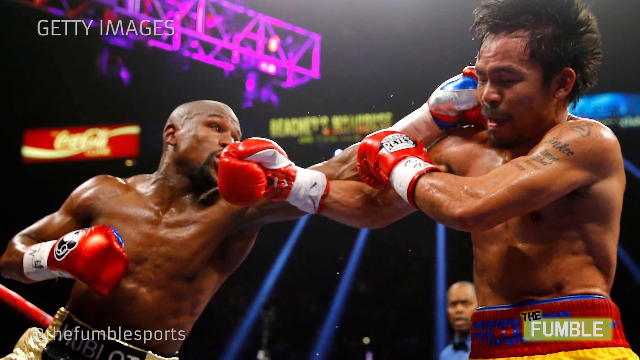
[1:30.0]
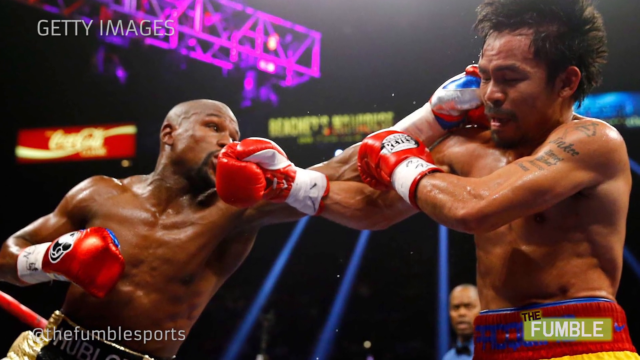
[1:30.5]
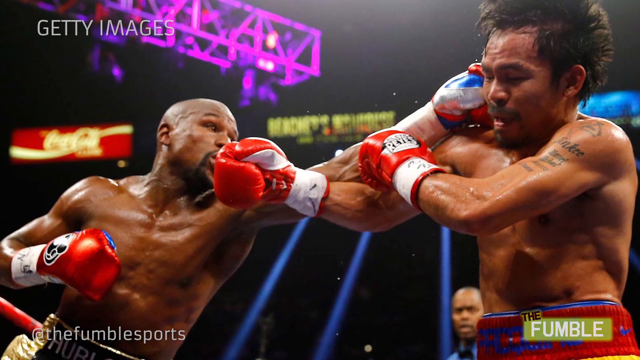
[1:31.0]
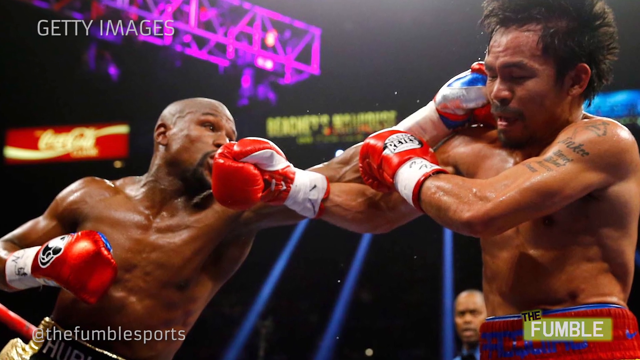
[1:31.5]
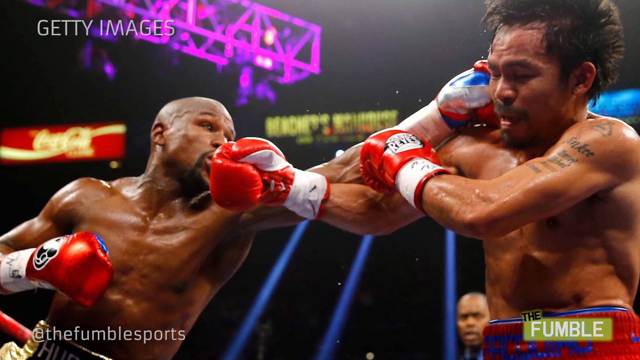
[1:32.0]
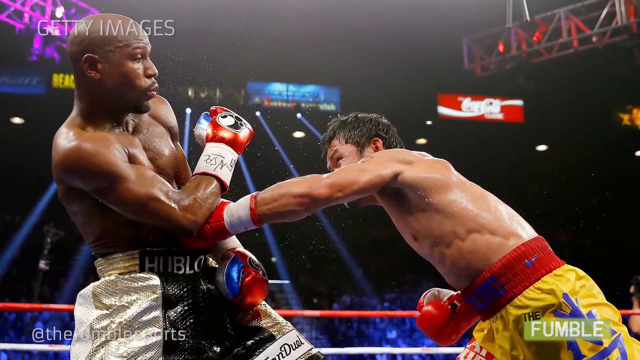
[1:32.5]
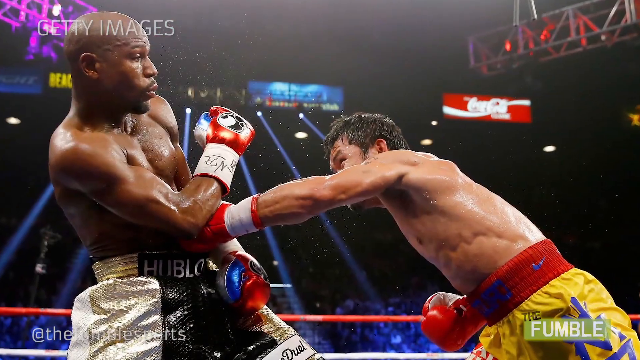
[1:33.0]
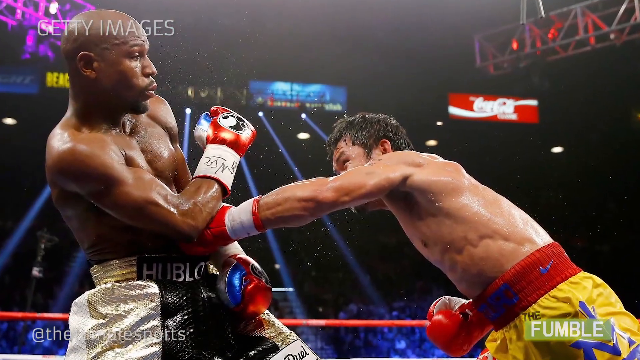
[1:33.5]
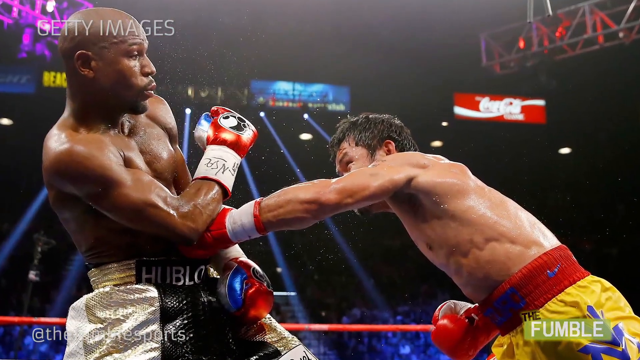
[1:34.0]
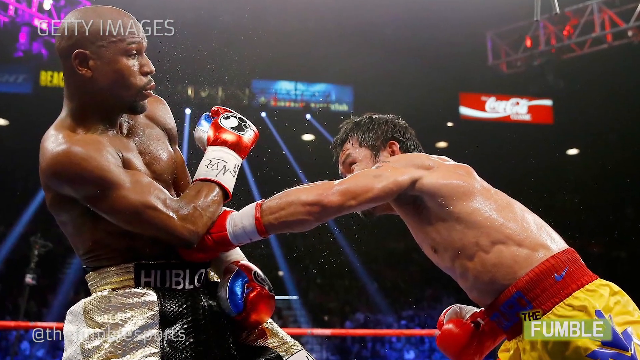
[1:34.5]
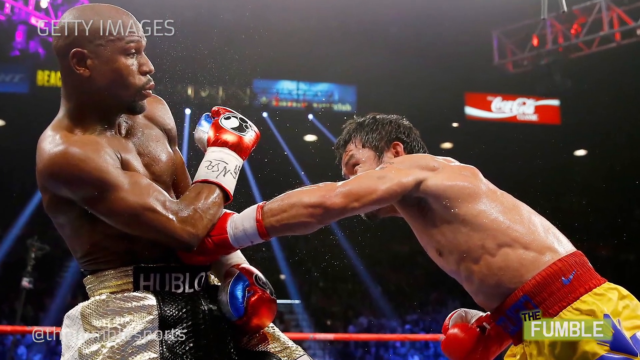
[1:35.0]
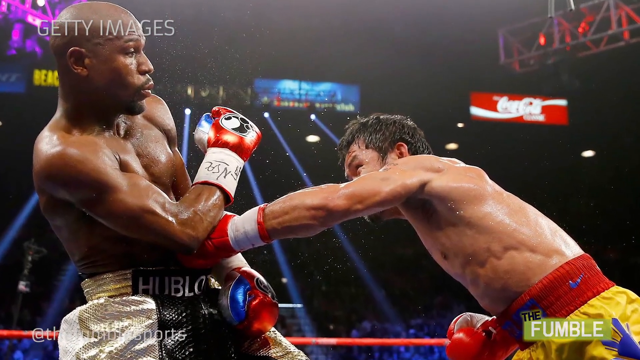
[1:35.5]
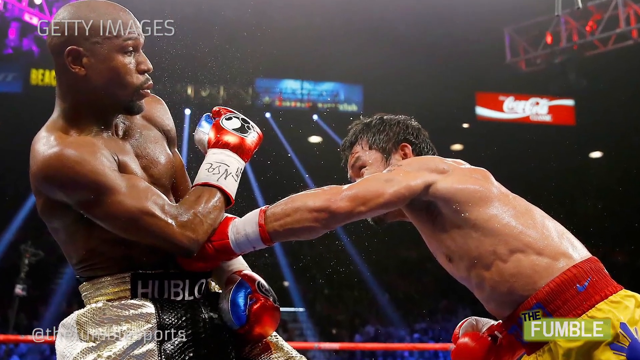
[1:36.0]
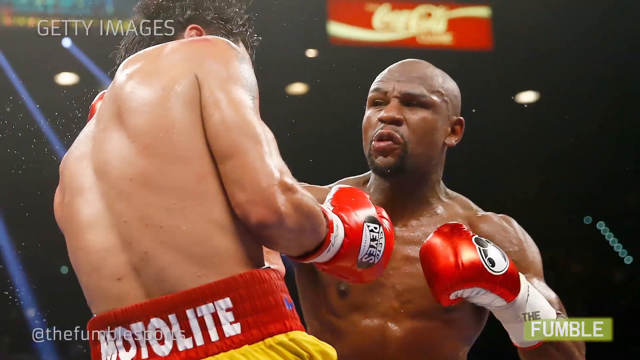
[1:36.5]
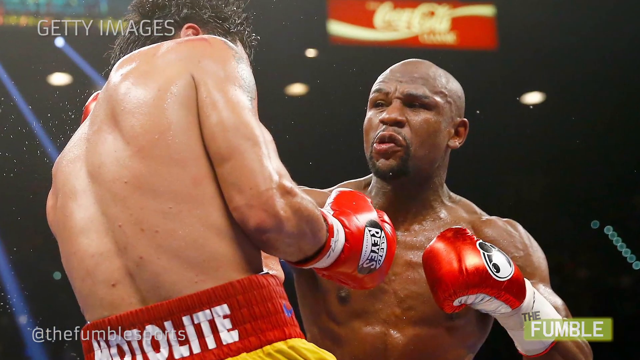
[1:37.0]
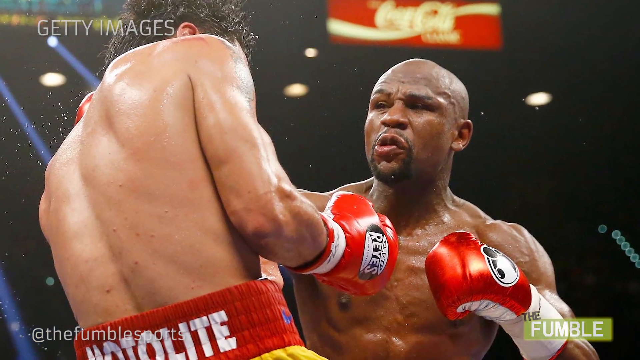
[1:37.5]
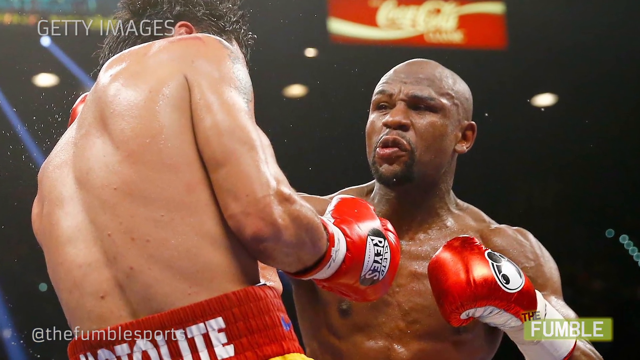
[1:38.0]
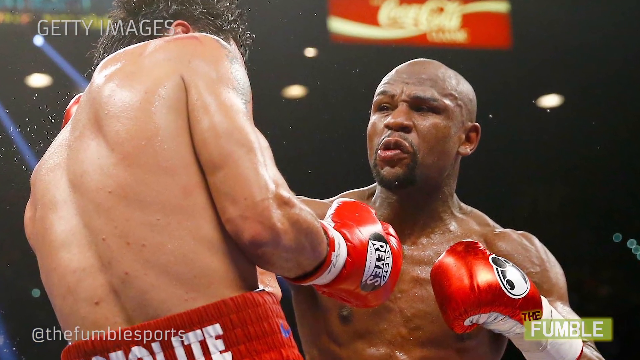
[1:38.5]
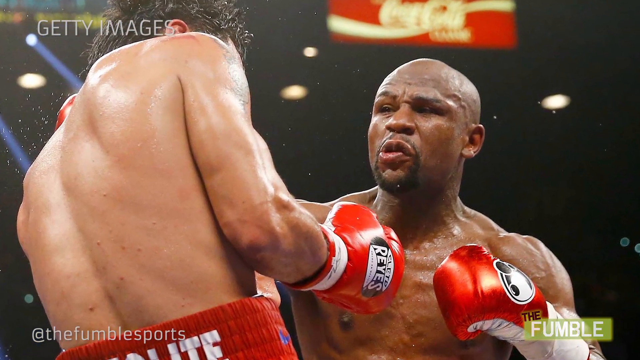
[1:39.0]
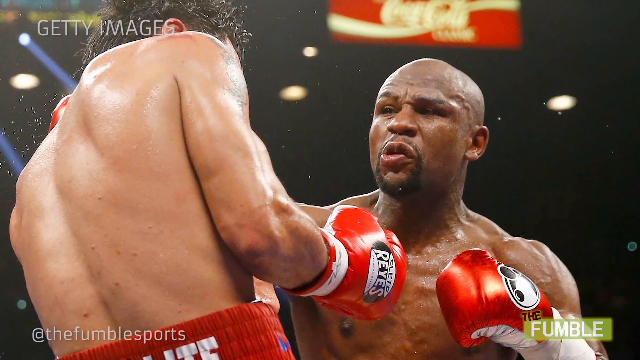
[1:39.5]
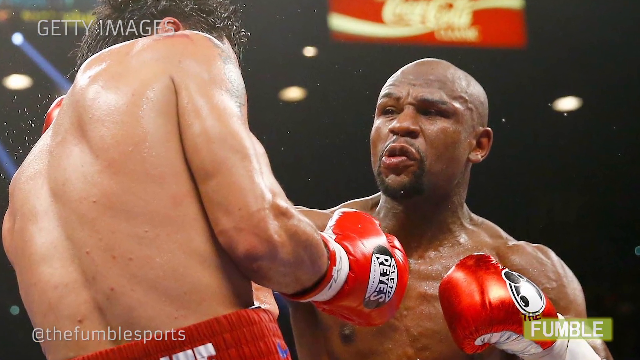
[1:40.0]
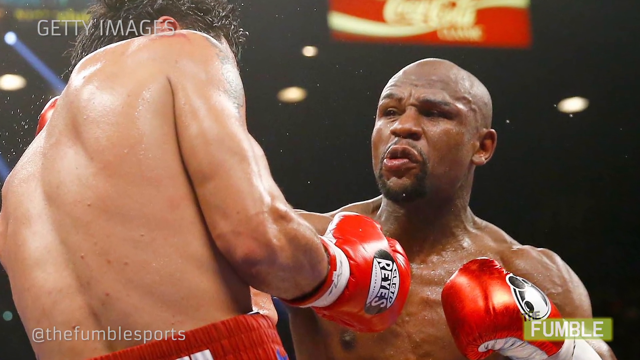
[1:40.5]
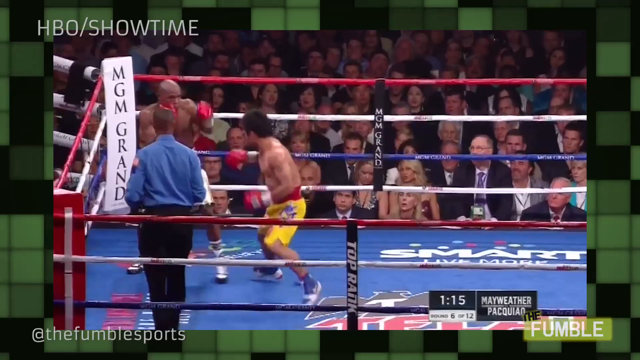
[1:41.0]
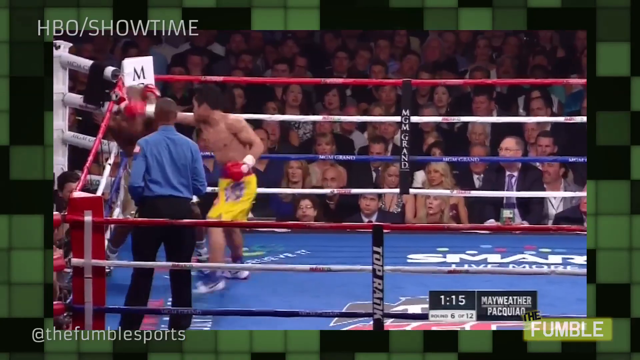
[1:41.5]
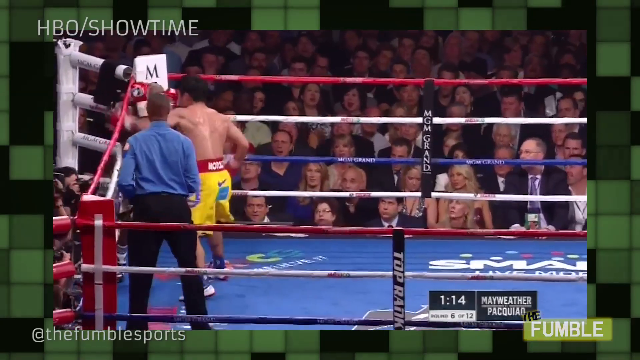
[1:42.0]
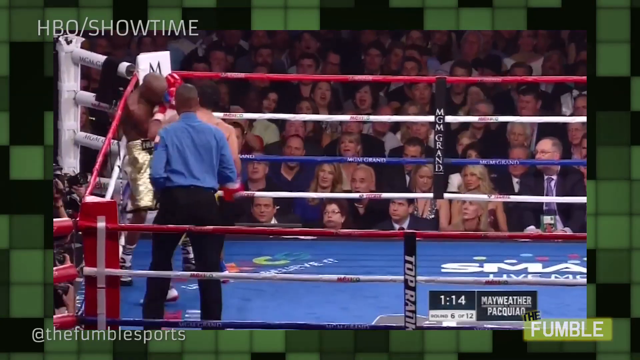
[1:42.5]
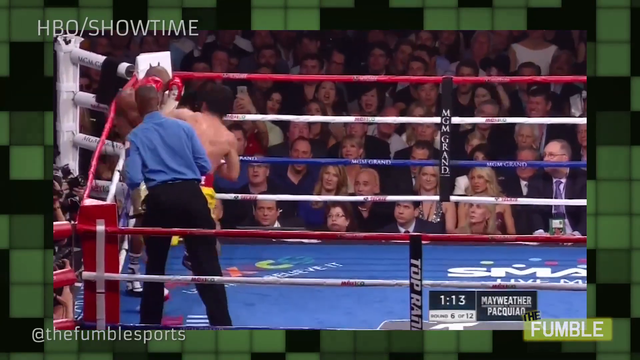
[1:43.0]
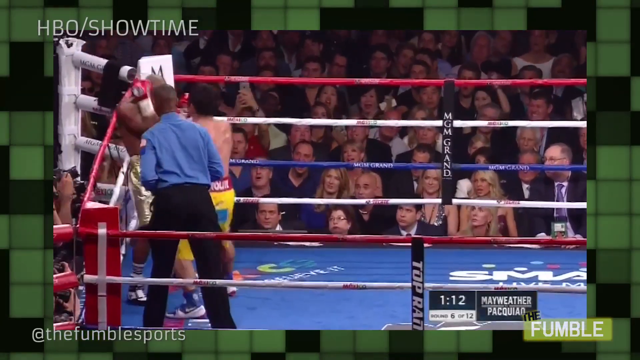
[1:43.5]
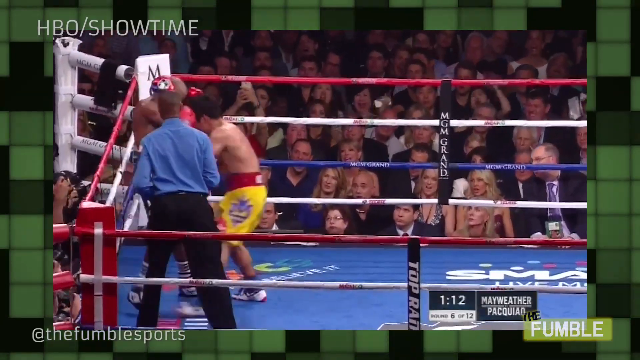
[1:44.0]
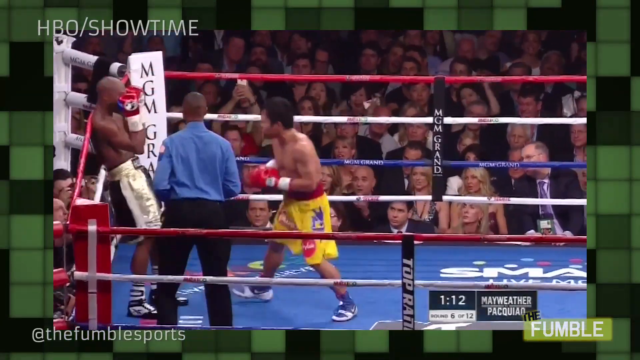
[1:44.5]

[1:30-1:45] A still photograph shows Mayweather and Pacquiao mid-fight, both covered in sweat and wearing red boxing gloves, with Mayweather reaching out and punching Pacquiao on the side of the head. The photograph has a watermark that says "Getty Images" and a tag for The Fumble. Another mid-fight photograph shows Mayweather leaning back while Pacquiao punches him in the stomach, with sweat flying in the air. In a further photograph, Mayweather punches forward toward Pacquiao, again with sweat sprayed in the air. The video then changes to actual footage of the match inside the ring, in which Mayweather is cornered against the ropes while Pacquiao takes multiple fast shots at him and his head.